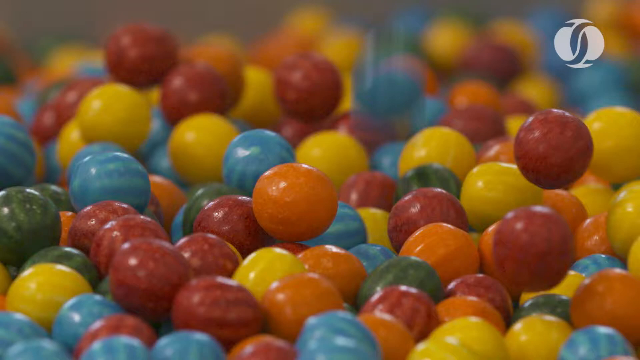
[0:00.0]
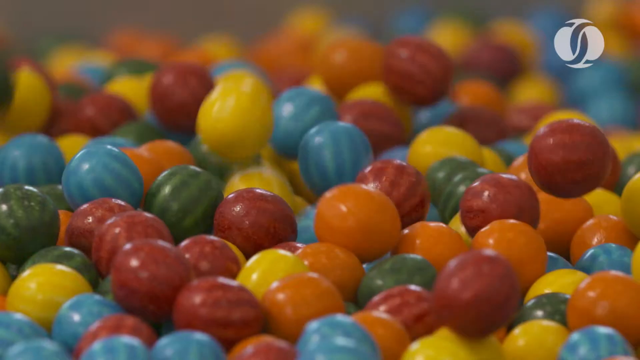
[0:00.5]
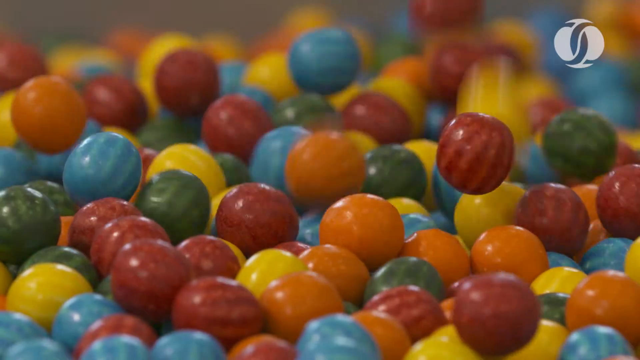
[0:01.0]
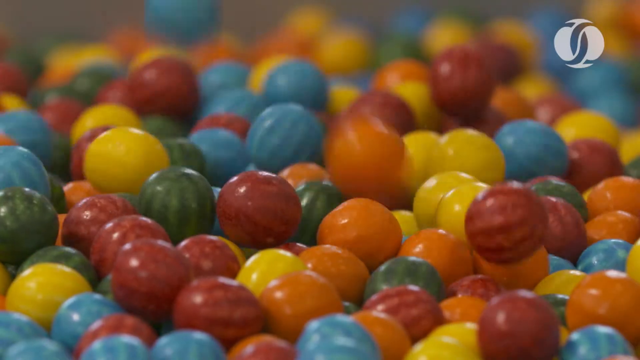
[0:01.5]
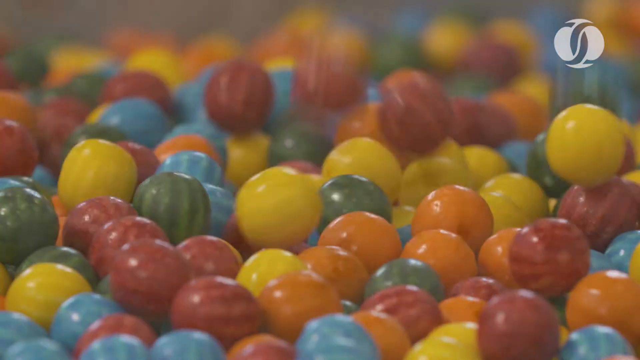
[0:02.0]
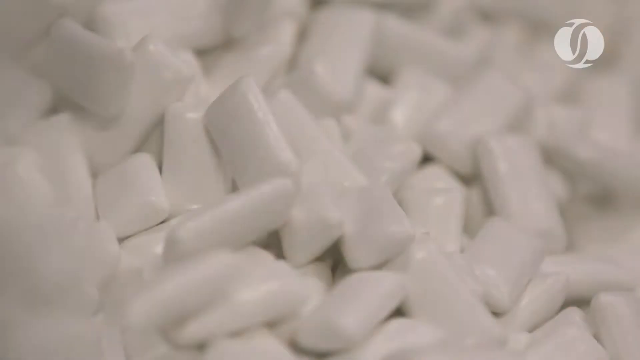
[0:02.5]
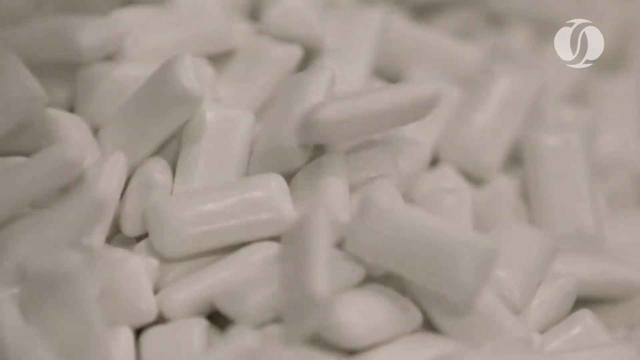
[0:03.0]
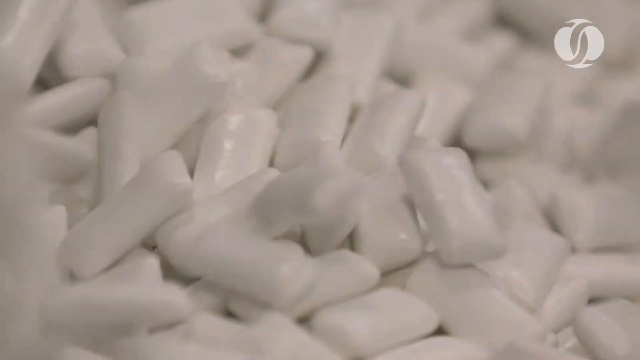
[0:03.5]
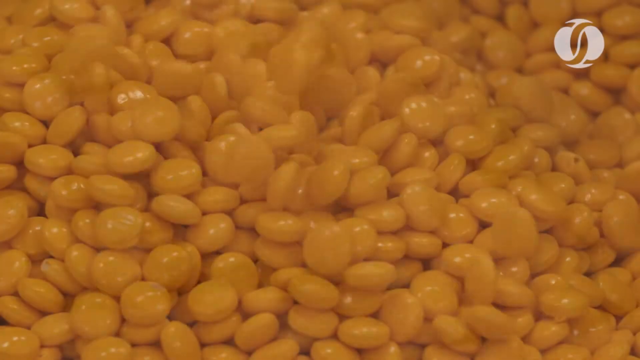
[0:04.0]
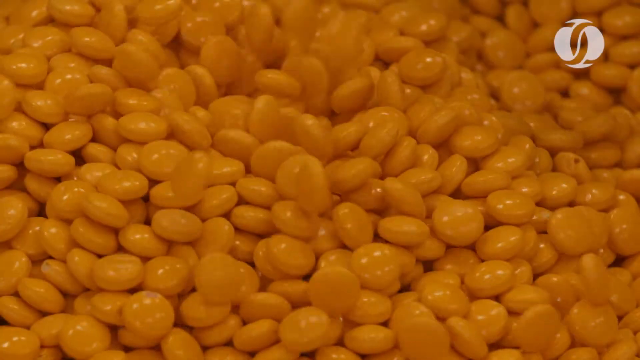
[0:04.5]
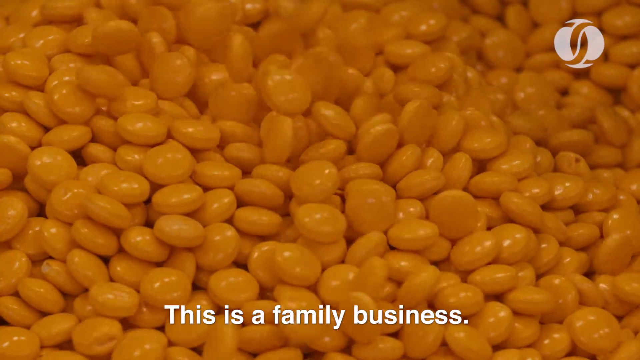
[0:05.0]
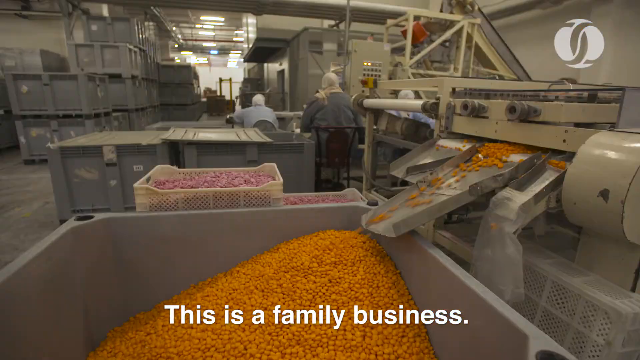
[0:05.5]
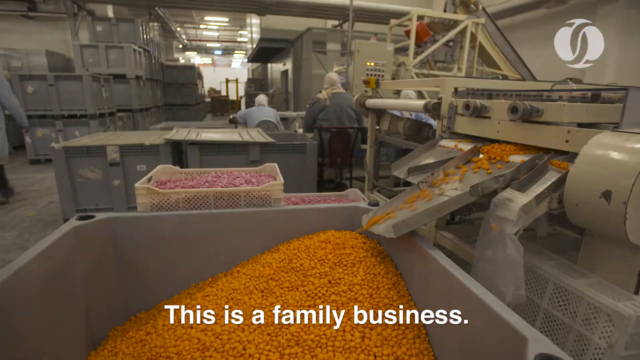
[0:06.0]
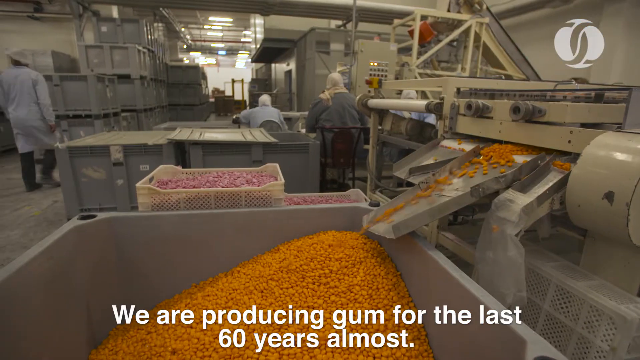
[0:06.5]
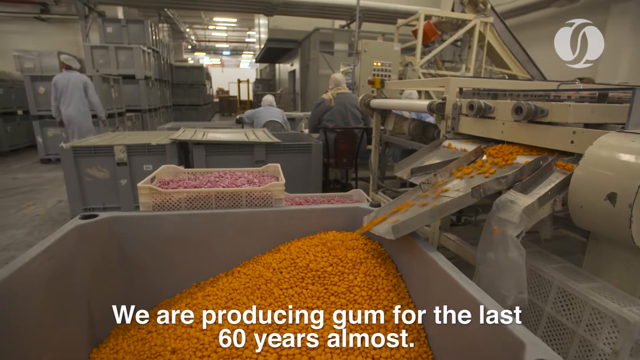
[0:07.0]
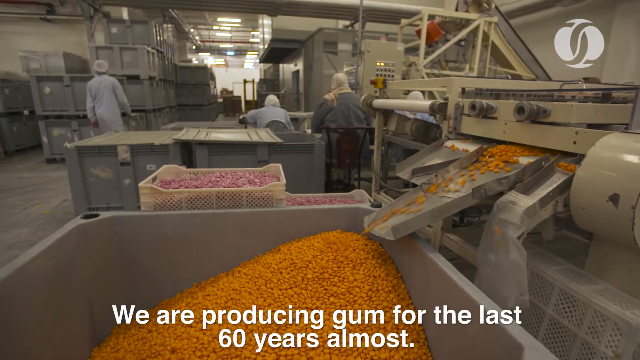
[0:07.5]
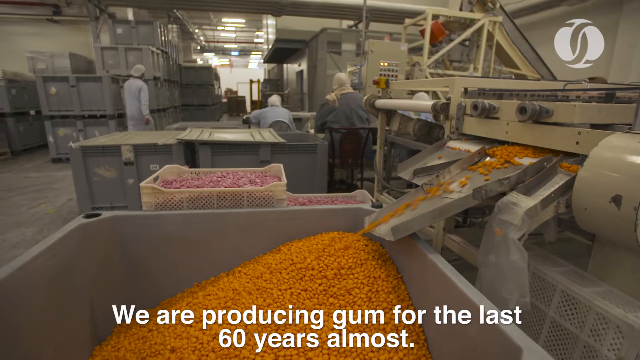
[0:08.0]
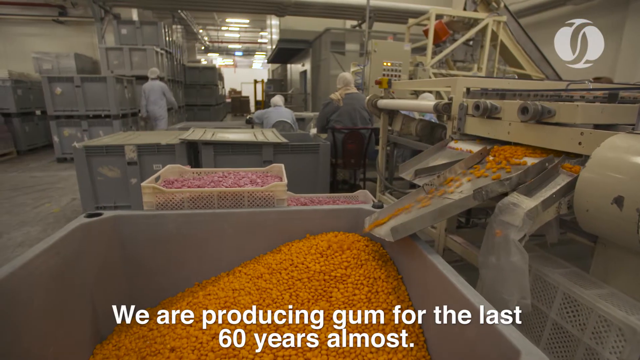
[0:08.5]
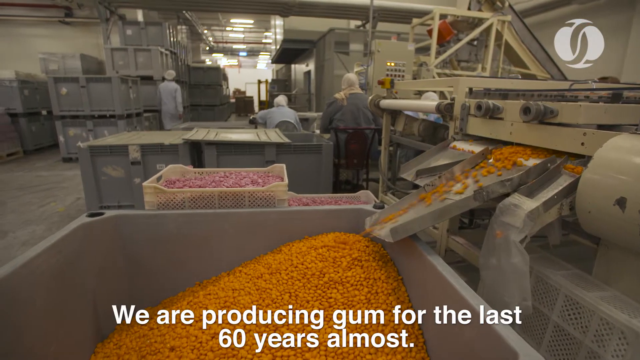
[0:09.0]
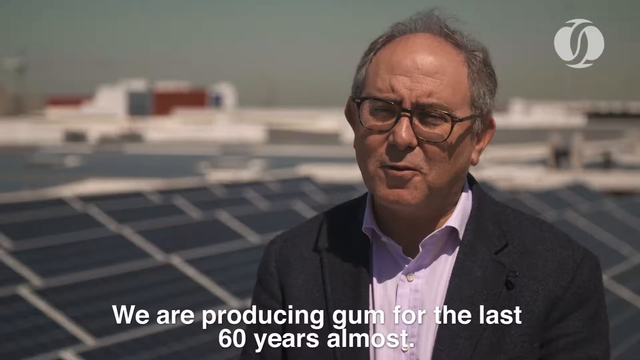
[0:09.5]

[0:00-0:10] Lots of plastic balls, probably a hundred or so, in red, green, blue and yellow, are dropping. A small circular icon at the top is maybe the channel's logo. Little pieces of gum then appear, with the text "This is a family business. We are producing gum for the last 60 years almost." Hundreds of pieces of white gum are shown, along with yellow gum. Purple gum follows, then the factory, a metal factory, and a man talking outside.